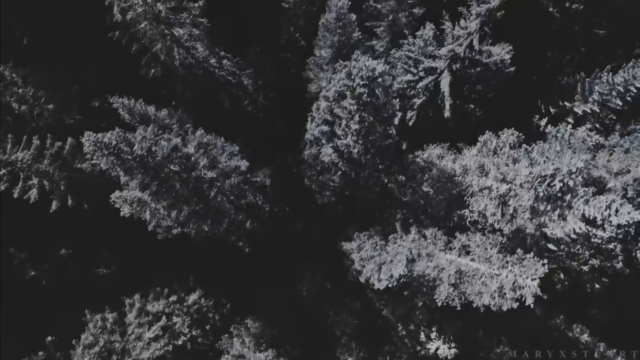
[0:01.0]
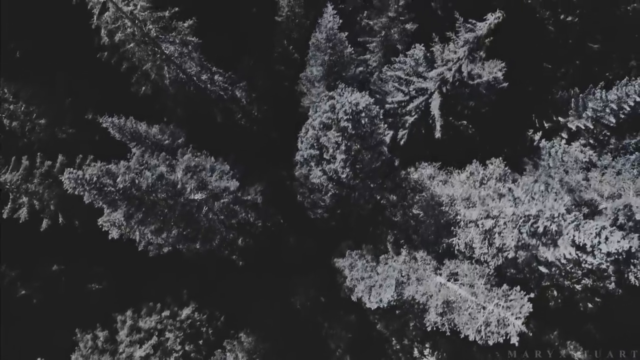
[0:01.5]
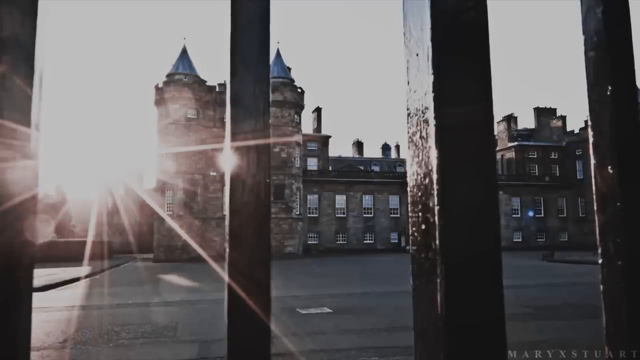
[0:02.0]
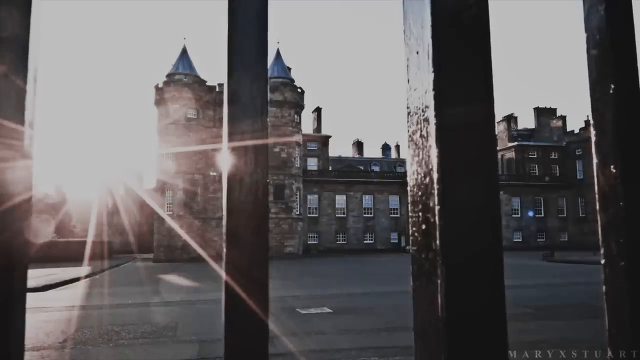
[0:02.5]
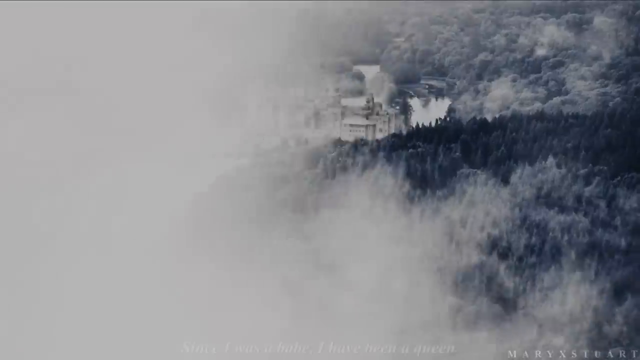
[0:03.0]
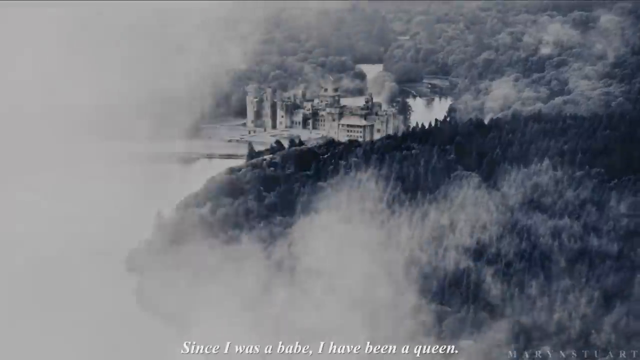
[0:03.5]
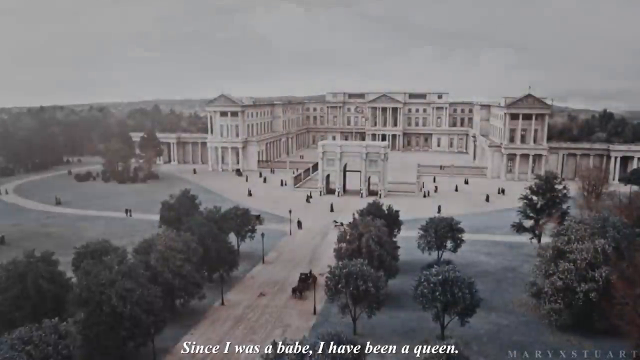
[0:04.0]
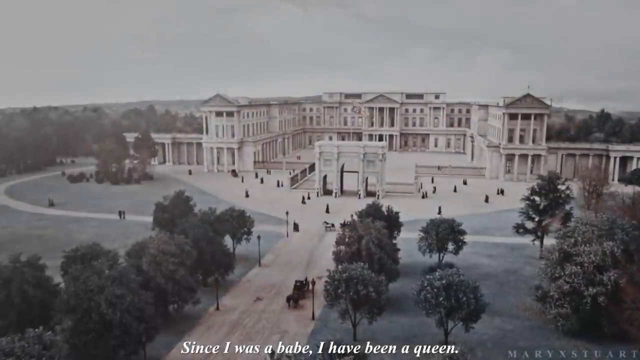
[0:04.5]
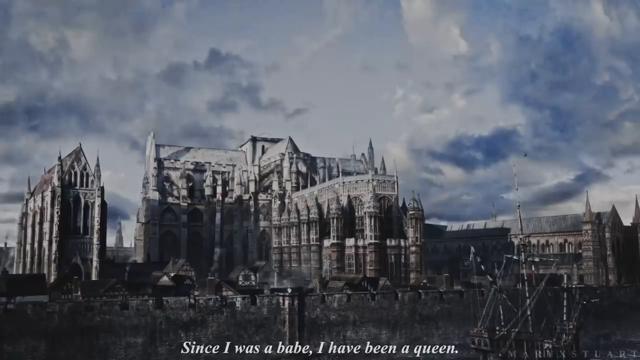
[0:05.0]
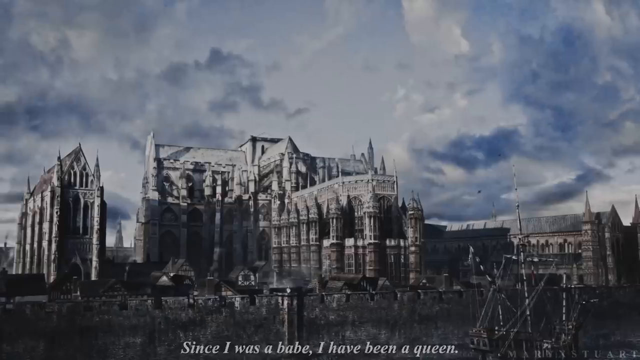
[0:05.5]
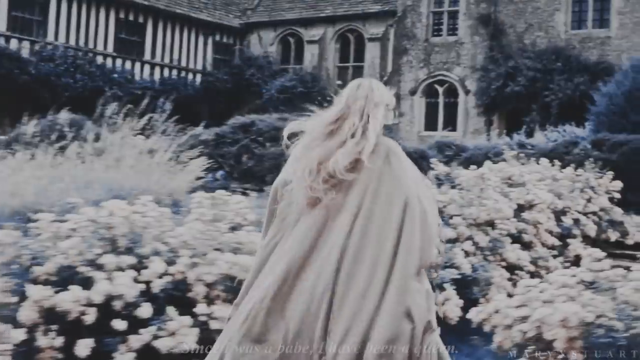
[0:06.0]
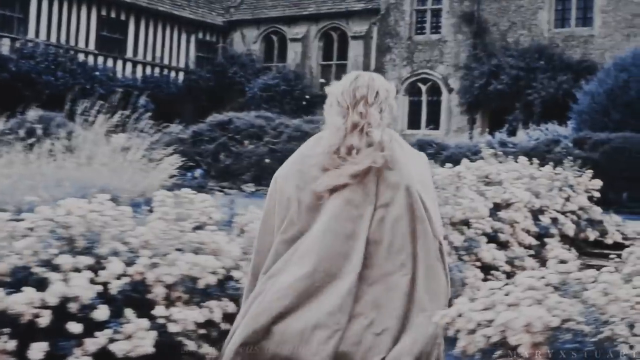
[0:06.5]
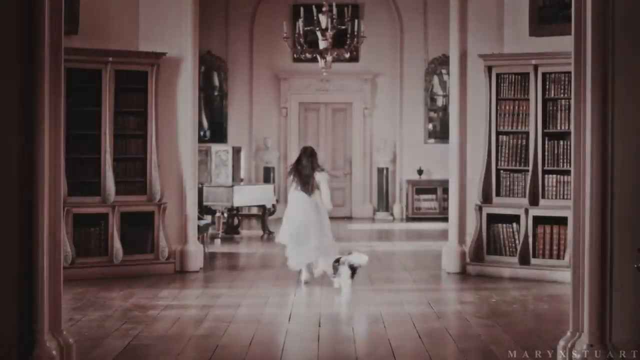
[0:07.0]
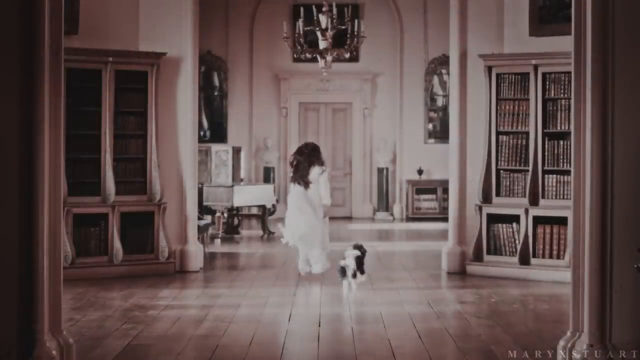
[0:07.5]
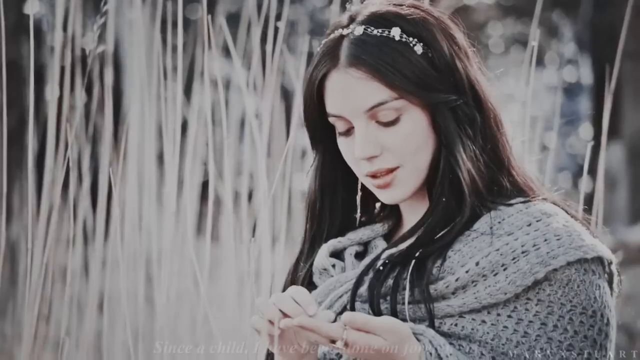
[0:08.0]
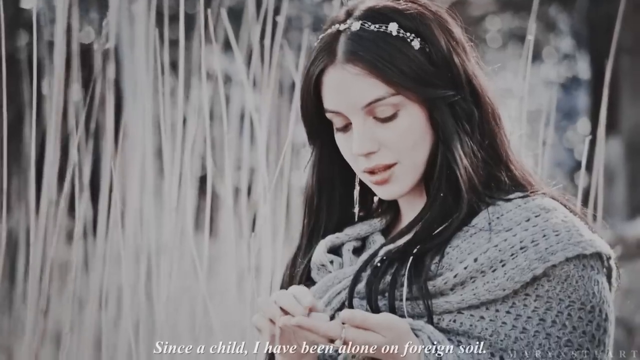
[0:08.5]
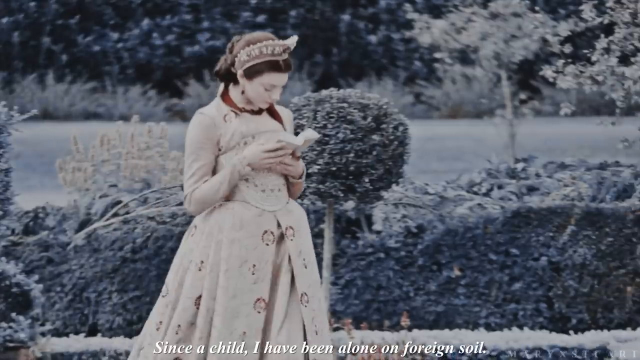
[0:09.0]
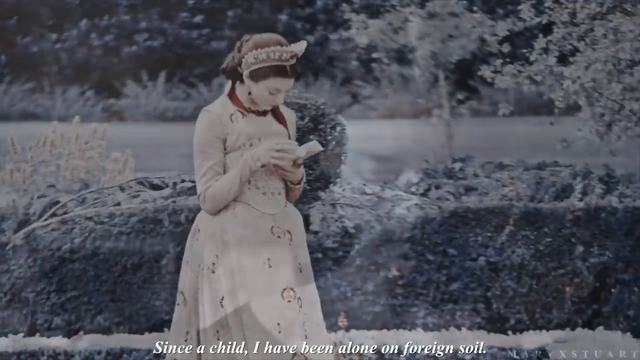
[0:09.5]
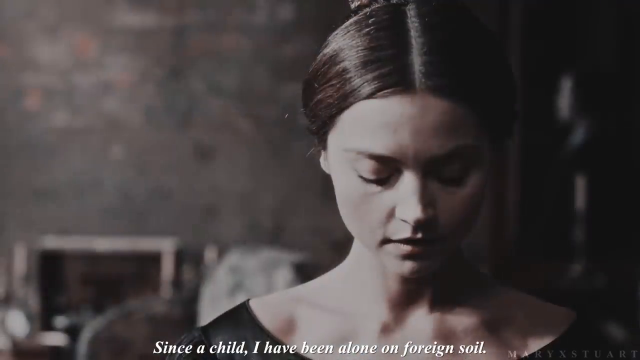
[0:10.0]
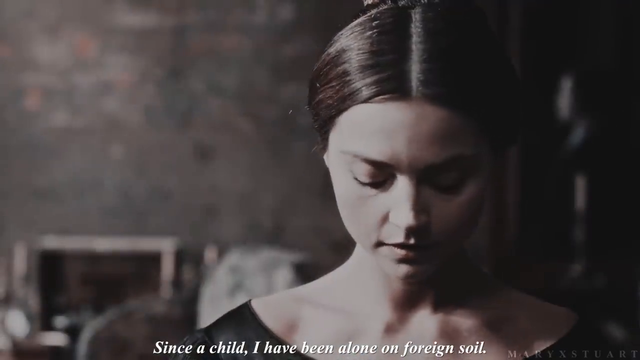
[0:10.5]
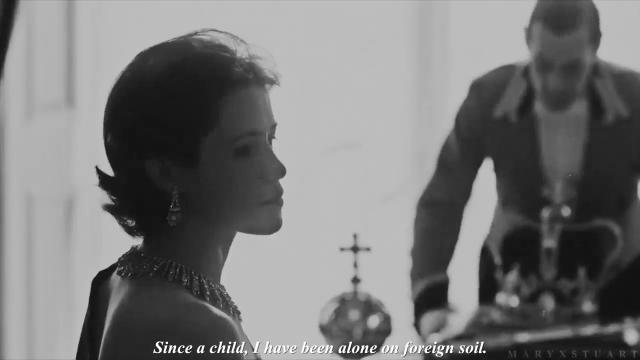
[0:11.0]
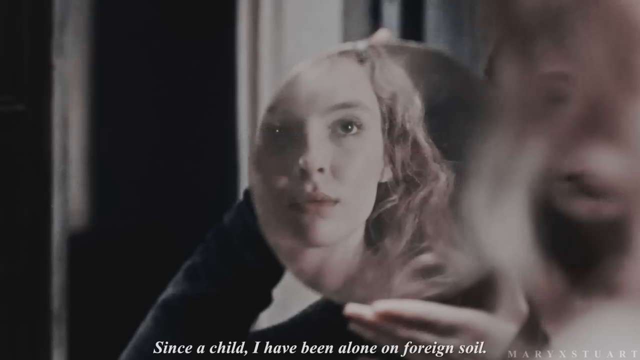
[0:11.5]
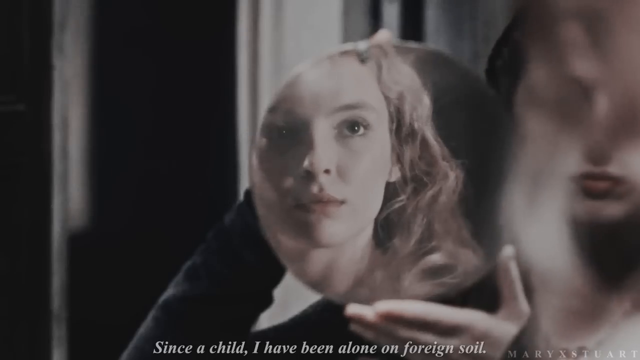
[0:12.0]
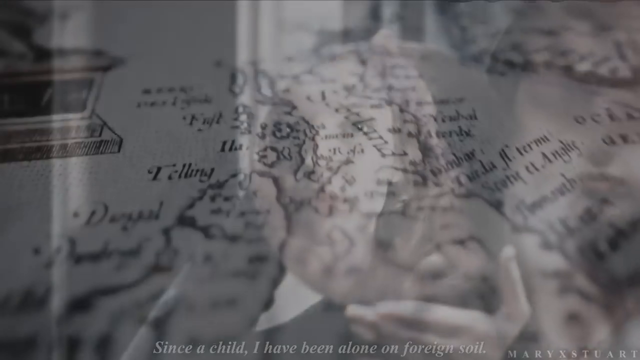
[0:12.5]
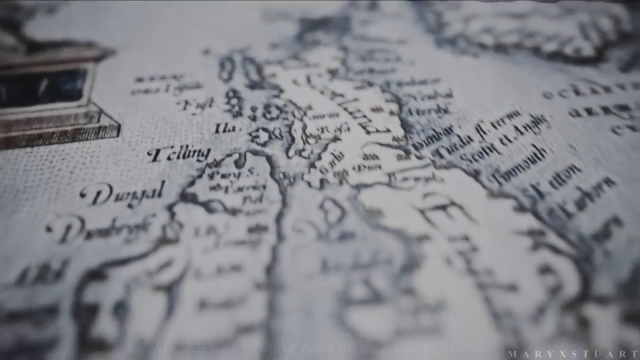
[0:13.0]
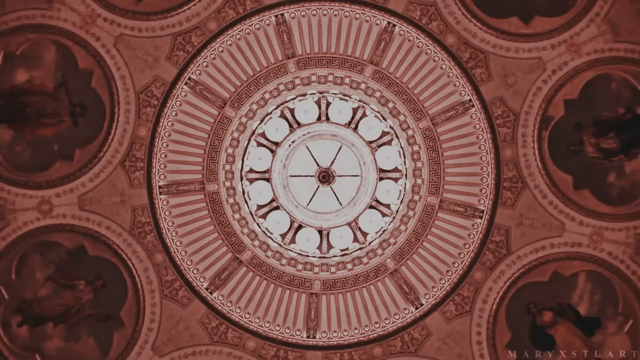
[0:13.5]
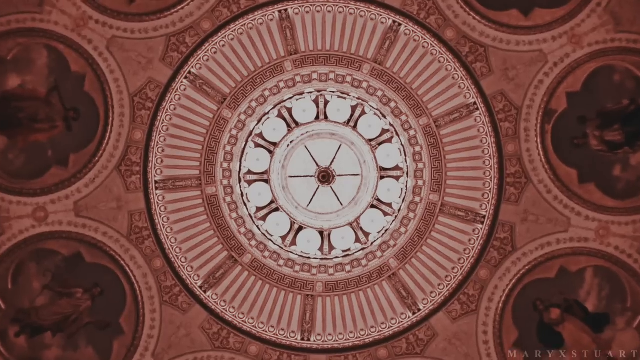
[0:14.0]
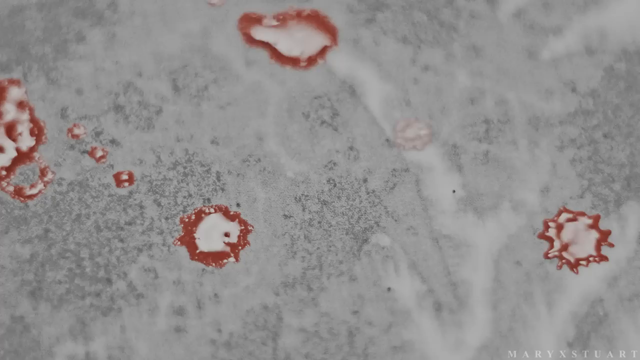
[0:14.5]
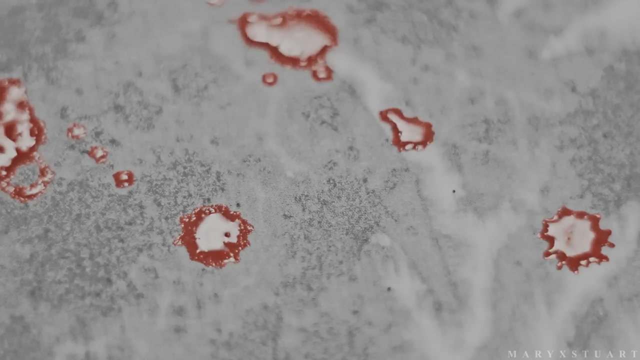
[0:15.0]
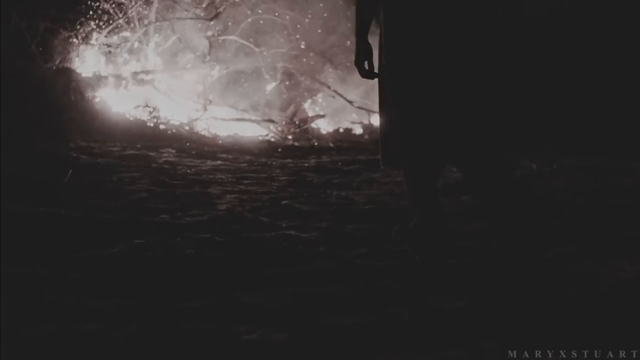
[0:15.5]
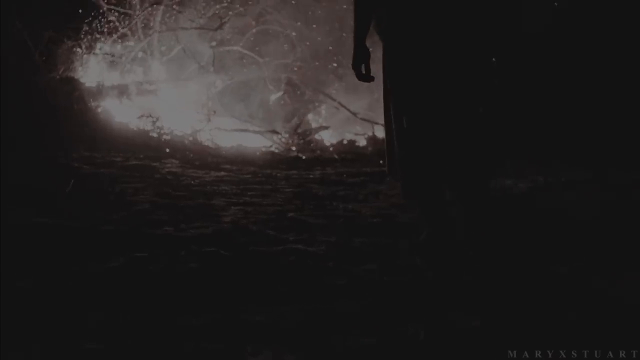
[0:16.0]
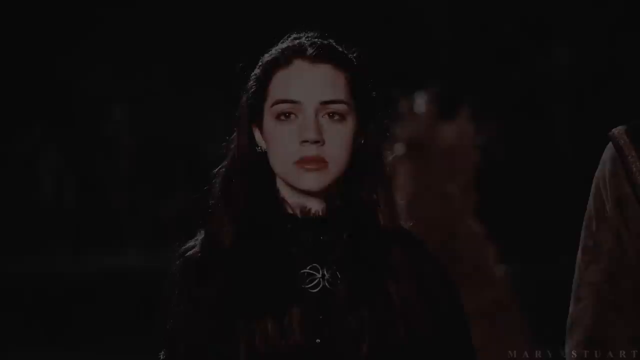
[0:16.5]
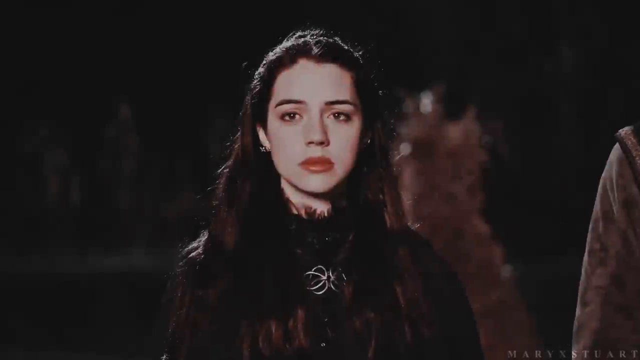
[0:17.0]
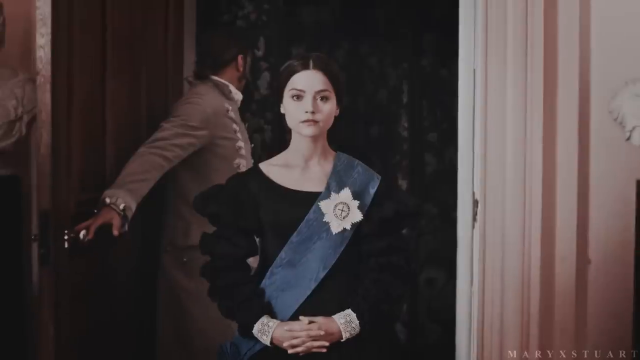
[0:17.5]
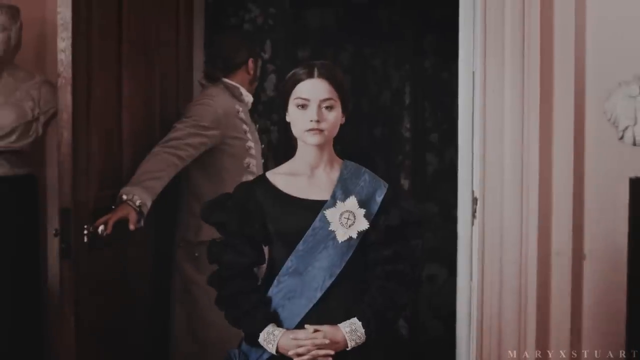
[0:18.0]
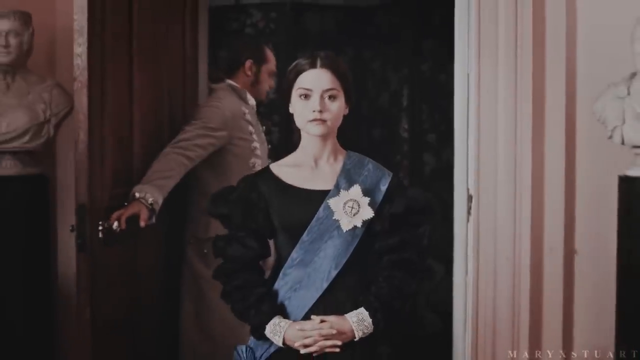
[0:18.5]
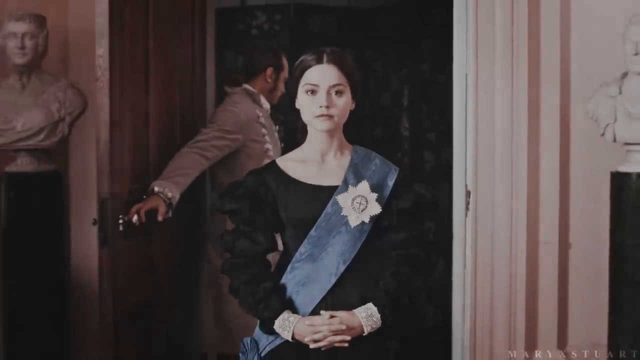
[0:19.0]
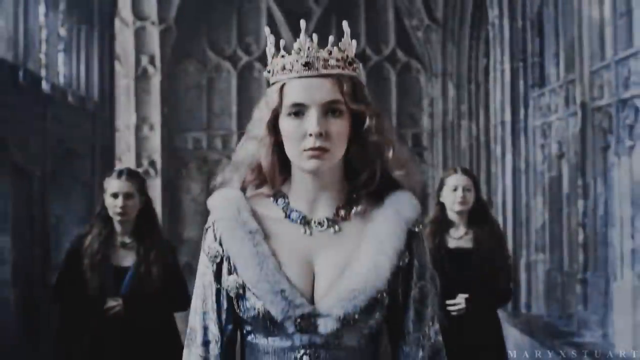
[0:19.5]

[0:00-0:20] The wide-format video opens entirely black, then quickly cuts to an overhead view, as if from a drone, looking straight down on a group of trees that point up like spikes. The trees are tall and narrow, and the image is black and white and very dark overall; the trees are only partially illuminated, and none of the surrounding area is visible. Next comes a side view with what look like bars or posts in front of the camera, too dark to make out clearly. Beyond them, just left of center, is an almost castle-like, or at least old stone, building with two blue peaks. The sun shines in the center just left of the peaks, creating a starburst. An overhead view from up in a cloud follows; the cloud fades toward the left as the camera pans to the right, revealing sort of a cliff below covered in trees and, in the distance, lower terrain with some buildings. Then a drone-level view shows the top of a building shaped like a U bowing toward the camera.